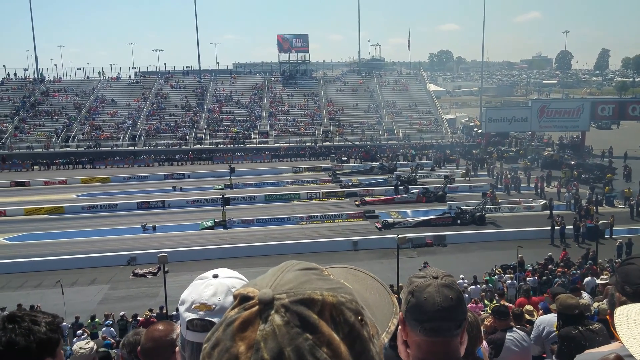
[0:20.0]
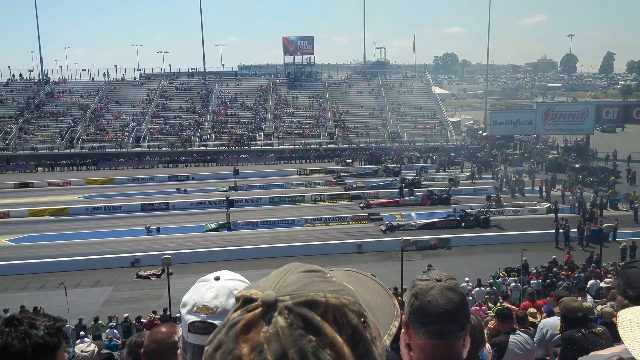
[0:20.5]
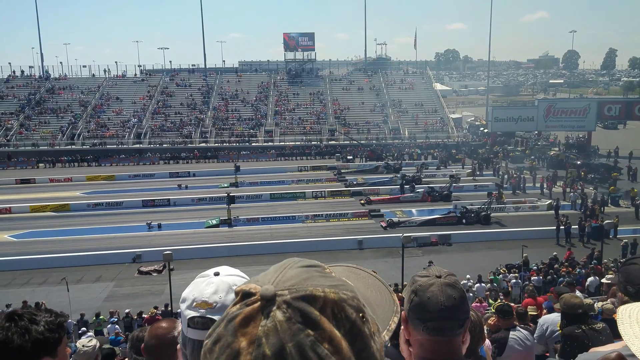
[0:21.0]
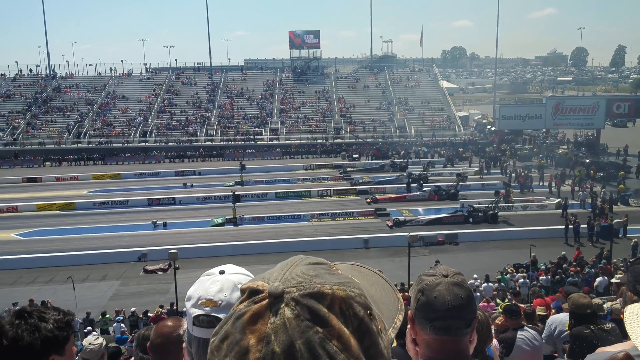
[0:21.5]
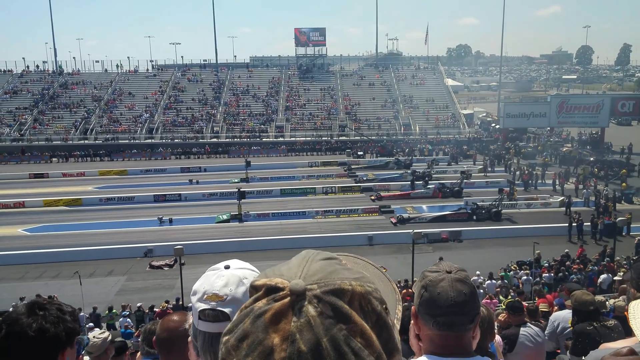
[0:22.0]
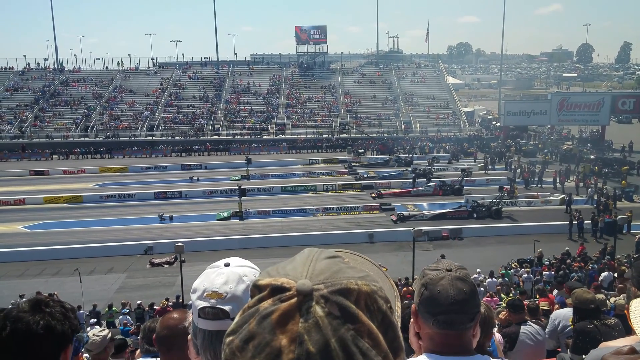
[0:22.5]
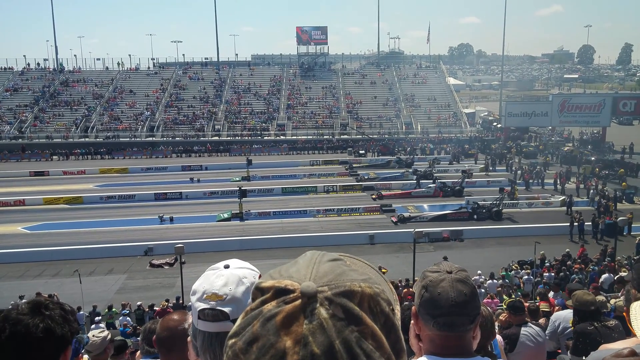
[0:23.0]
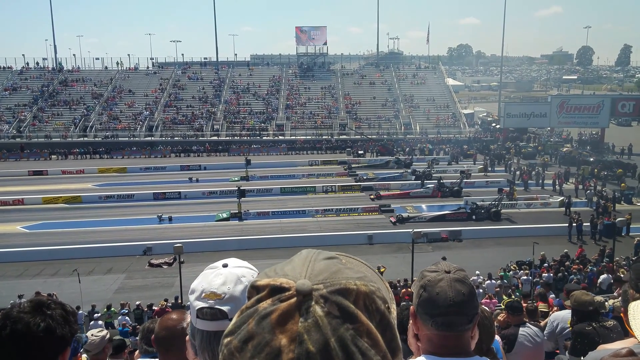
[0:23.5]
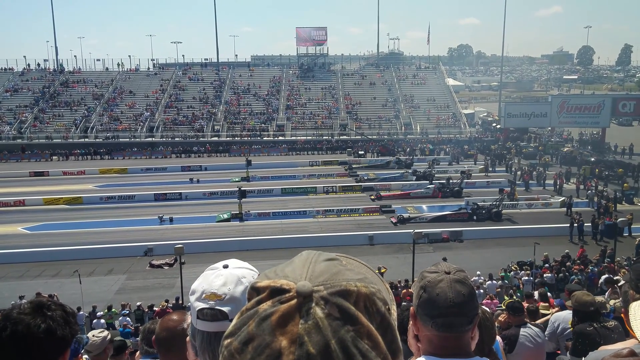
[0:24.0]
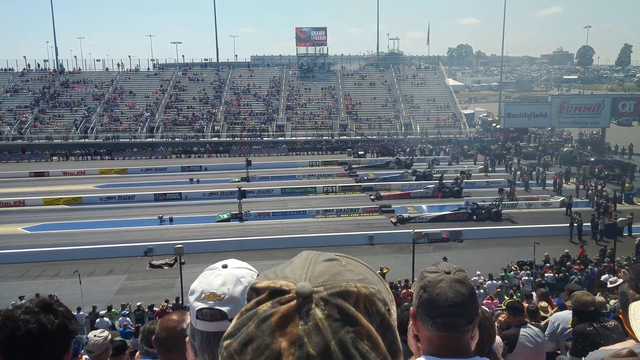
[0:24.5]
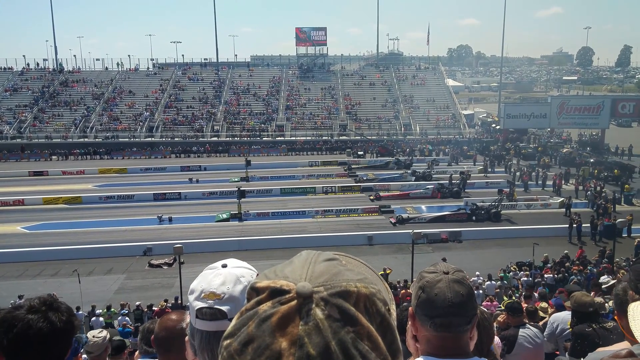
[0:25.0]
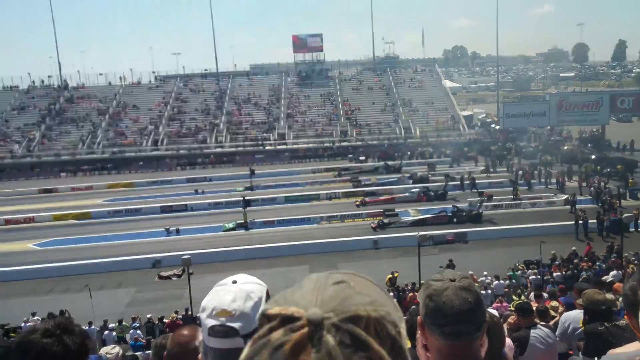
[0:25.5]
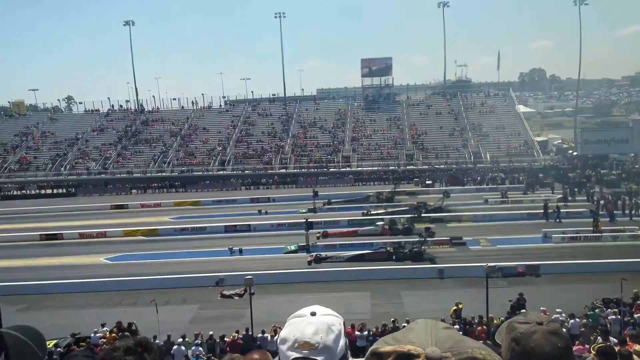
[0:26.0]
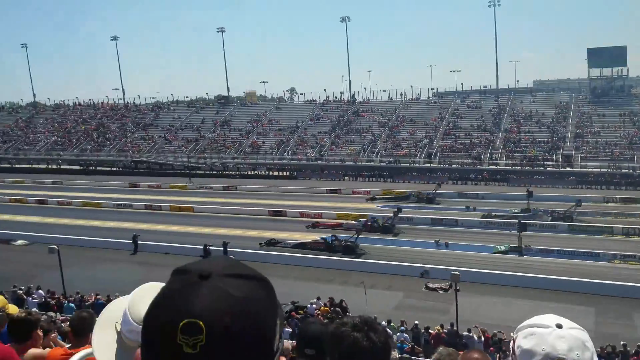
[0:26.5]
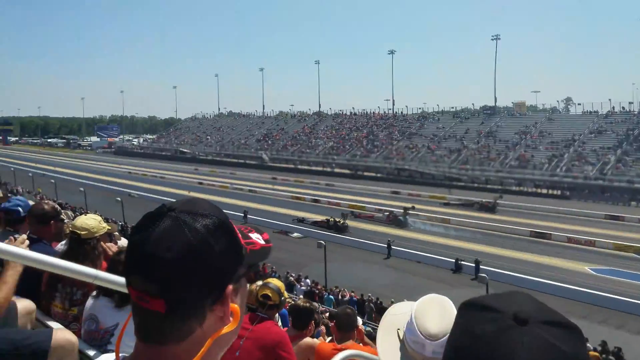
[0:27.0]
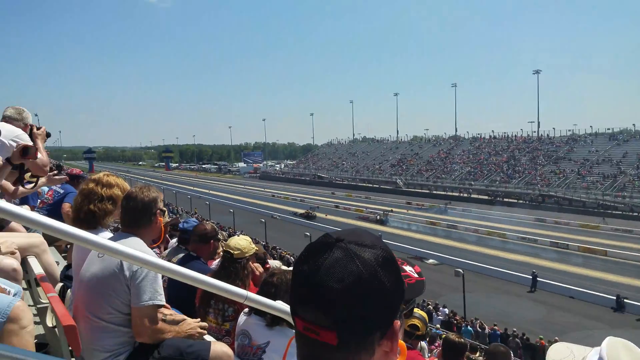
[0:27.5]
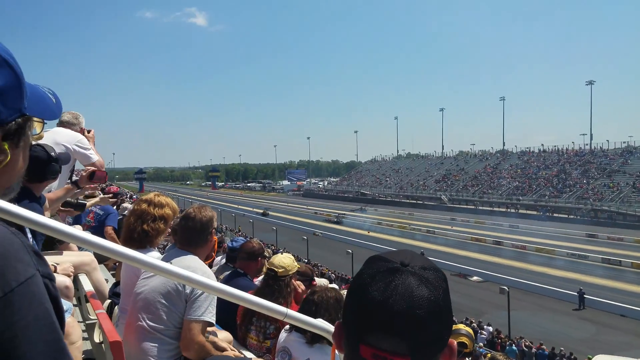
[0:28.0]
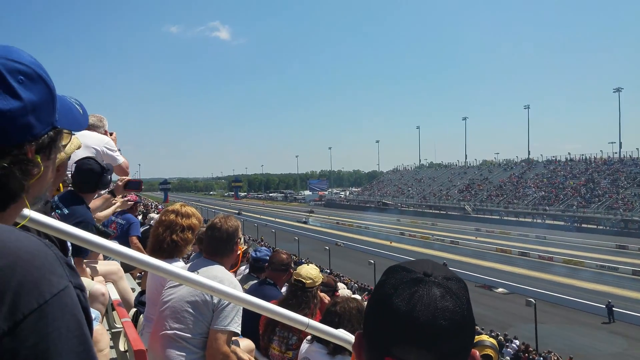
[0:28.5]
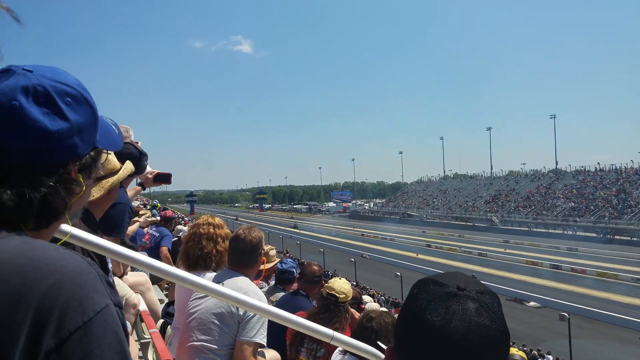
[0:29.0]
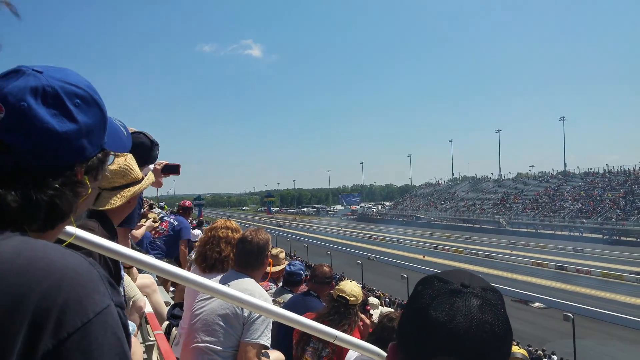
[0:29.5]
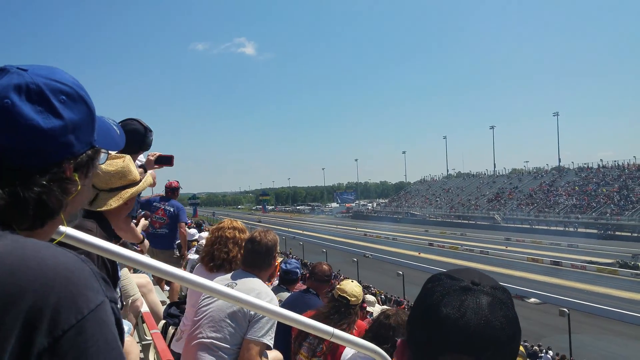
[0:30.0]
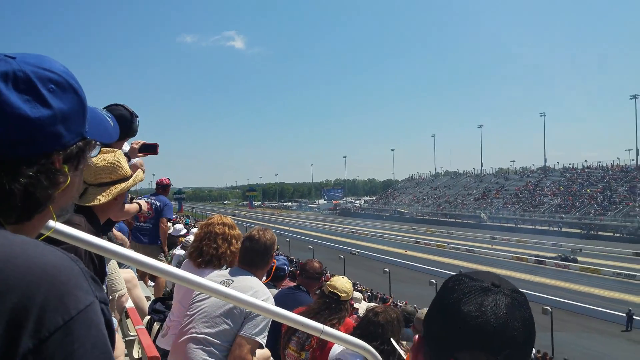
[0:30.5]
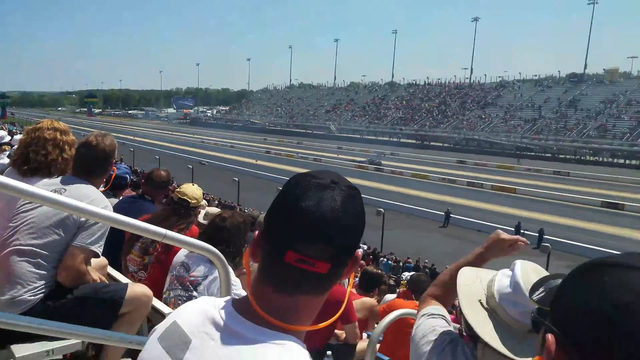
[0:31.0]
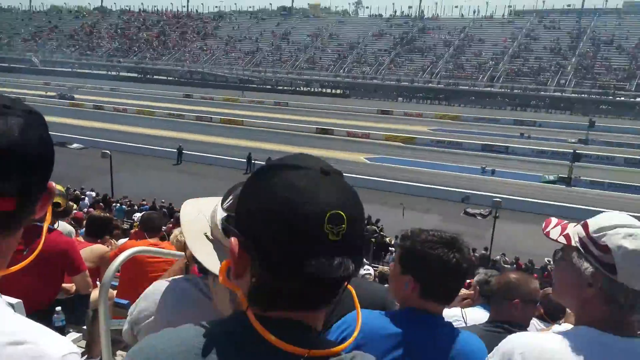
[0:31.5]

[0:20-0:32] The four race cars wait on the track in equal starting positions, with lots of people standing behind them, watching and getting everything prepared for the race. After a few seconds, the racers seem to get the signal to go, and they all take off at the same time with great speed, zooming off to the left. The car in the furthest left lane appears to be in the lead, with the cars in the second and fourth lanes following quickly behind. The car in the third lane takes off but quickly seems to slow down and have some kind of complication, coming to a stop a few hundred feet away from the finish line while the other cars zoom off the screen.